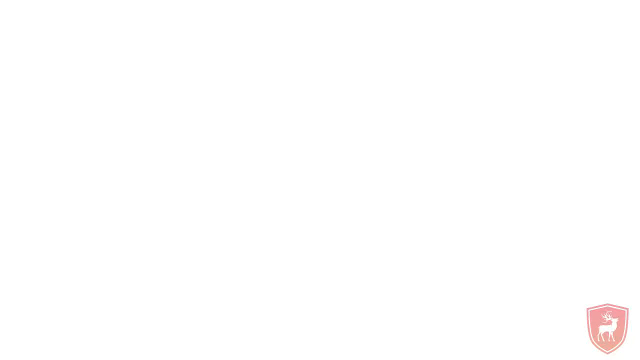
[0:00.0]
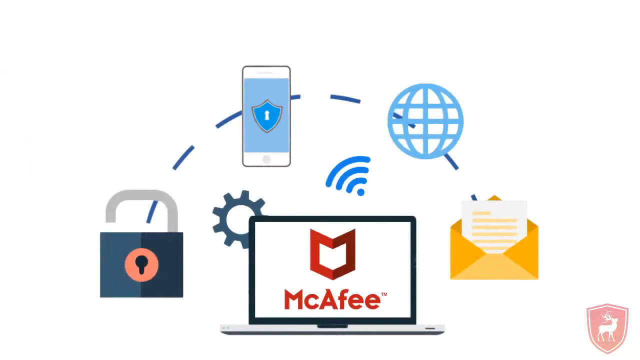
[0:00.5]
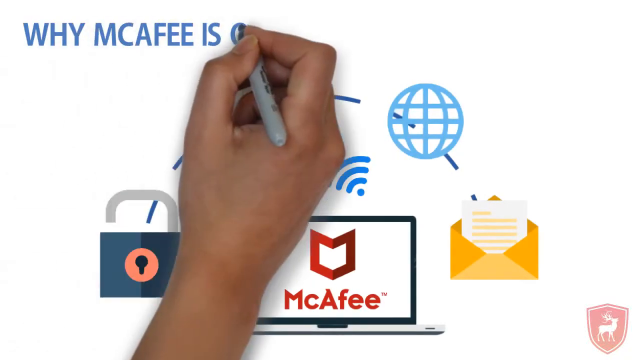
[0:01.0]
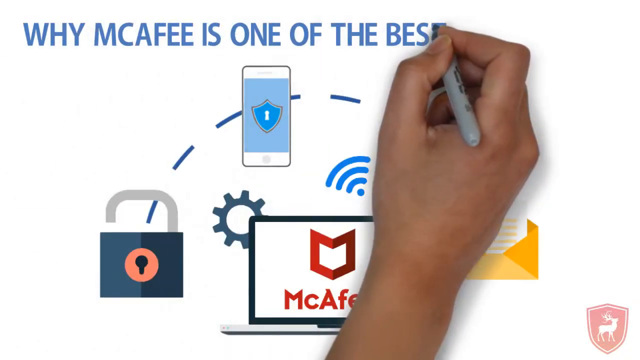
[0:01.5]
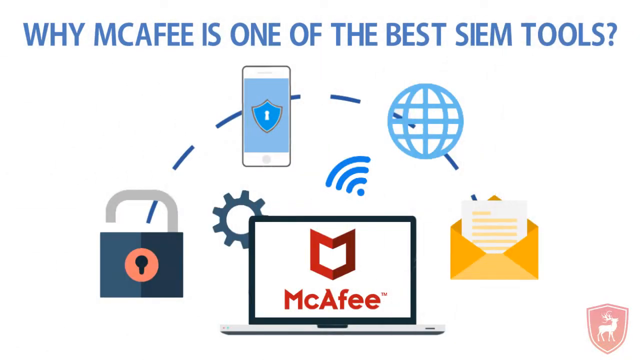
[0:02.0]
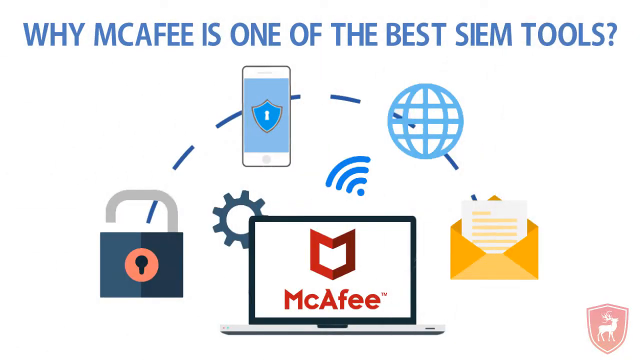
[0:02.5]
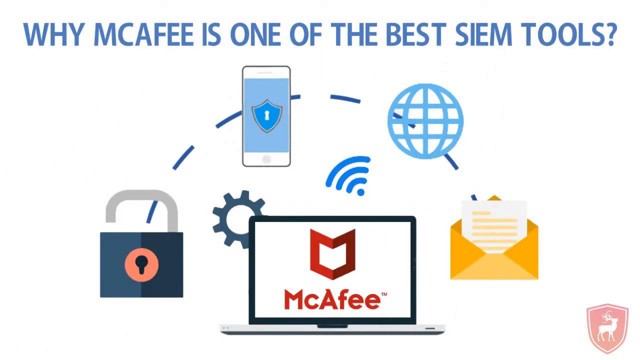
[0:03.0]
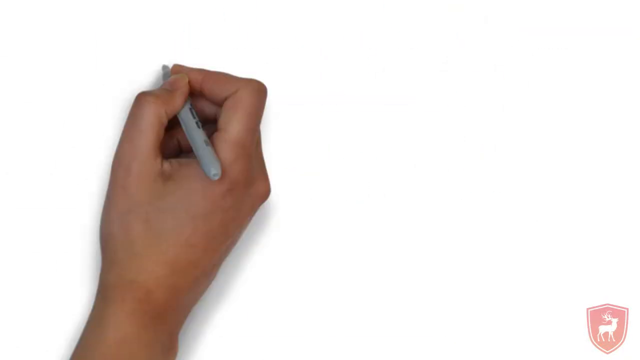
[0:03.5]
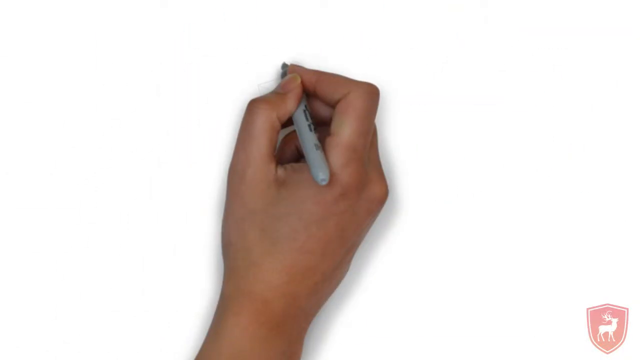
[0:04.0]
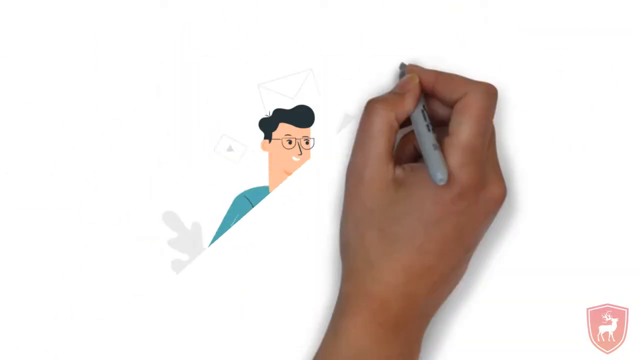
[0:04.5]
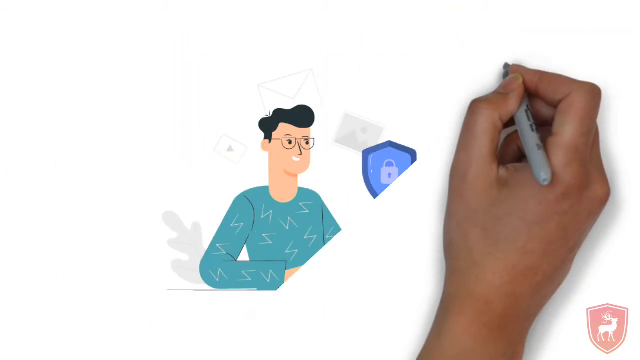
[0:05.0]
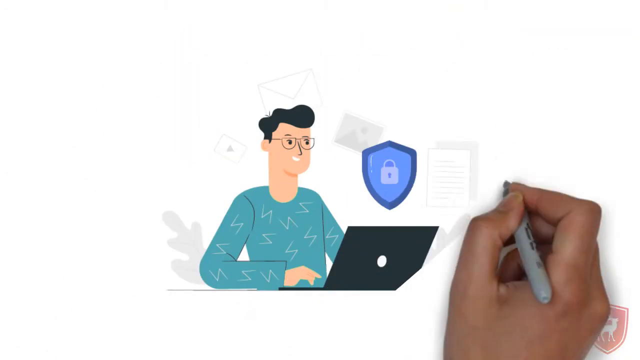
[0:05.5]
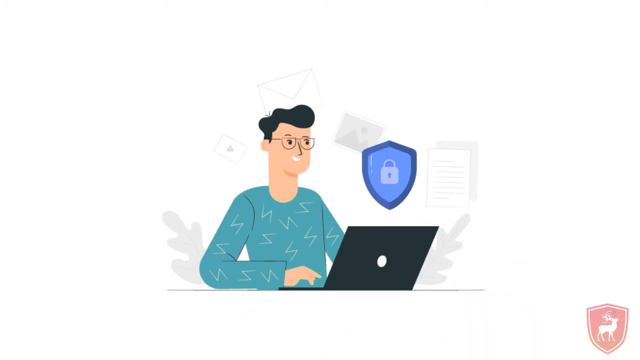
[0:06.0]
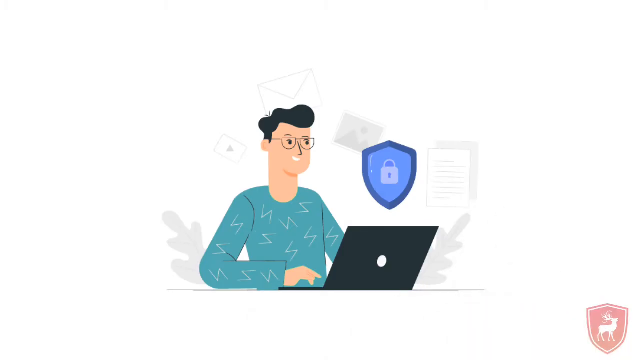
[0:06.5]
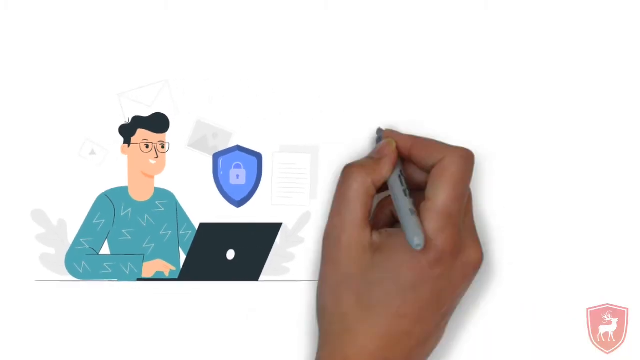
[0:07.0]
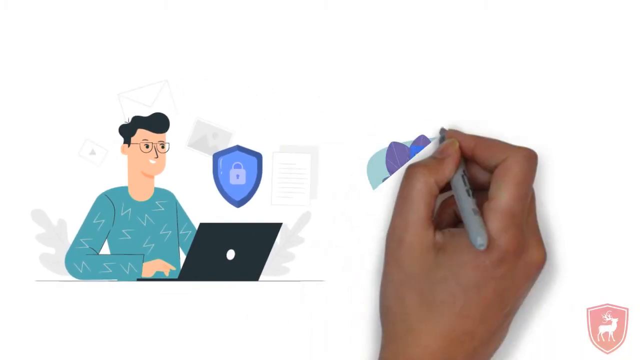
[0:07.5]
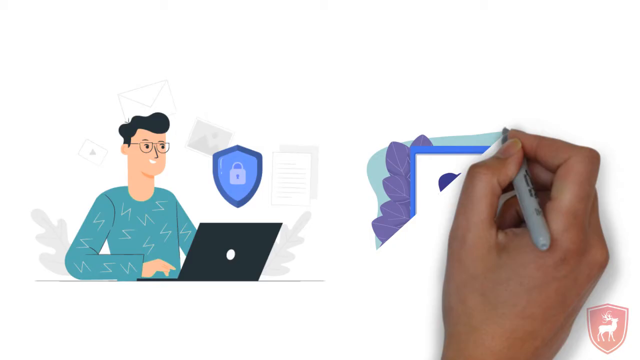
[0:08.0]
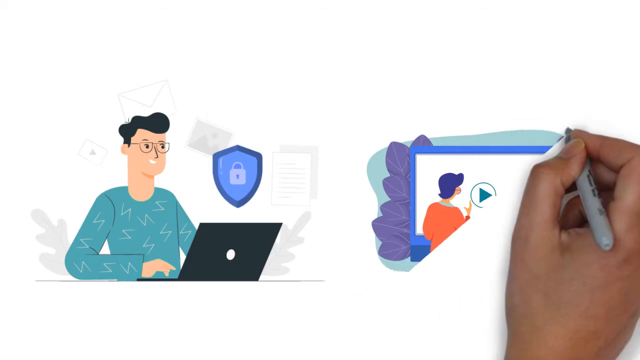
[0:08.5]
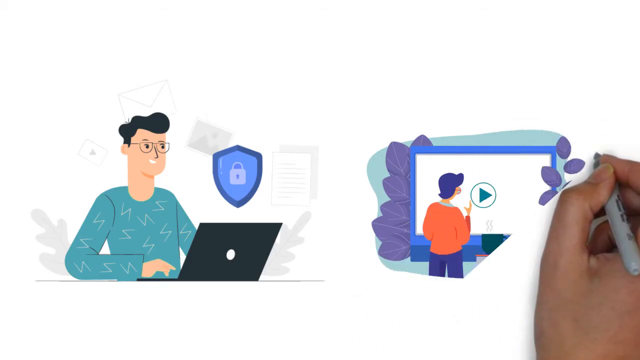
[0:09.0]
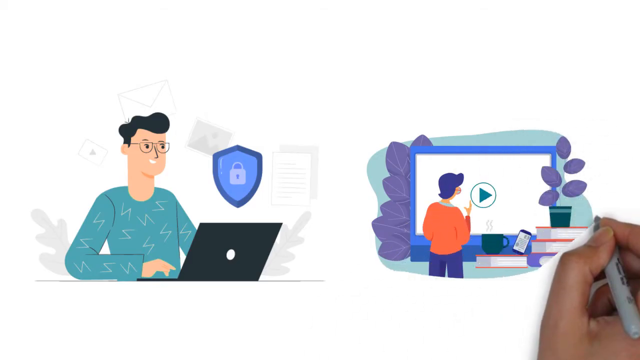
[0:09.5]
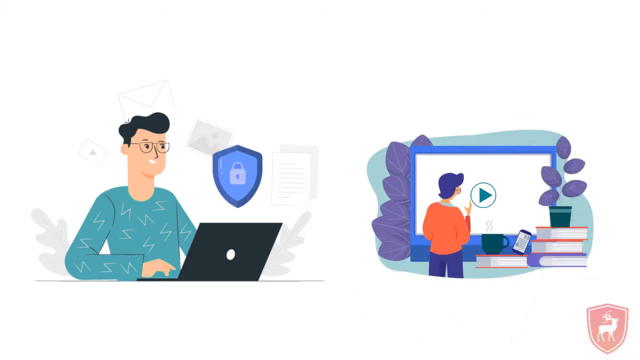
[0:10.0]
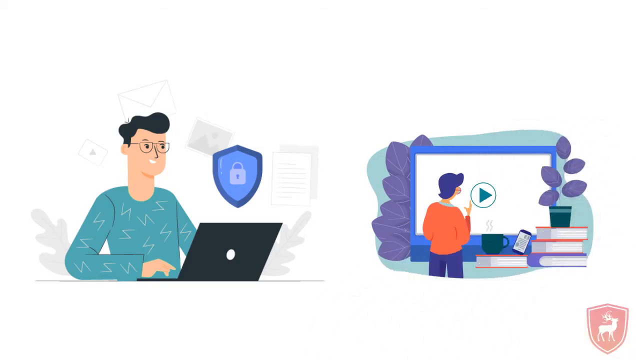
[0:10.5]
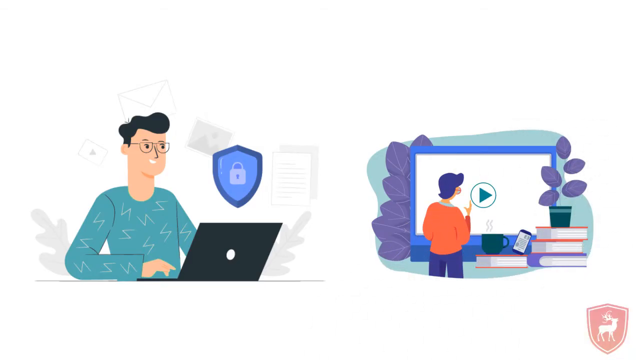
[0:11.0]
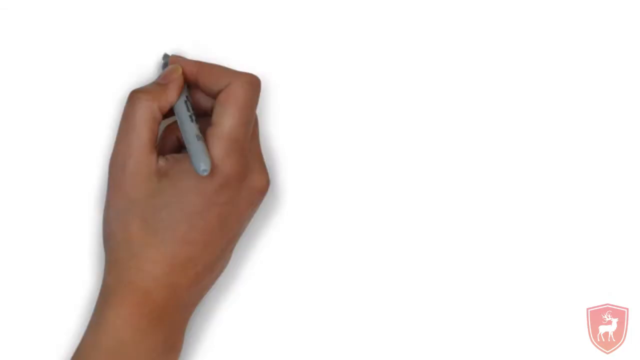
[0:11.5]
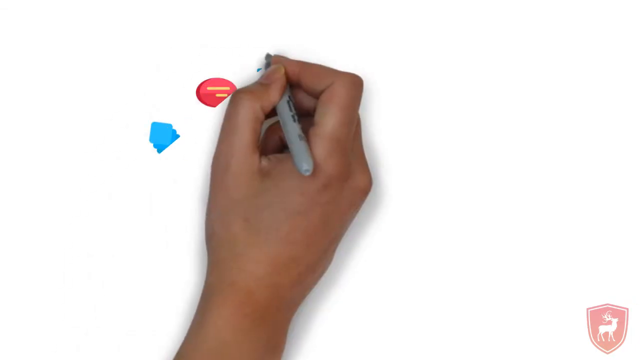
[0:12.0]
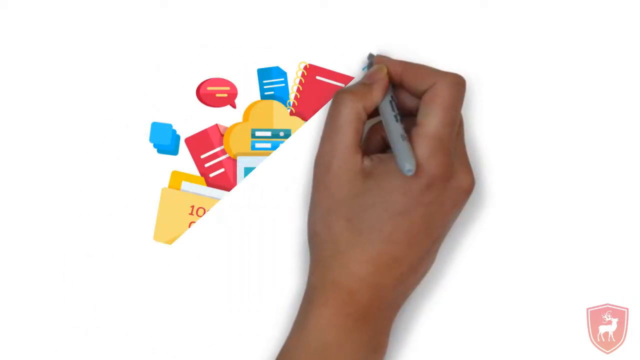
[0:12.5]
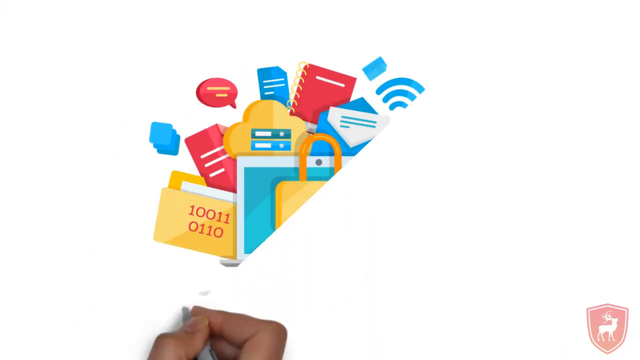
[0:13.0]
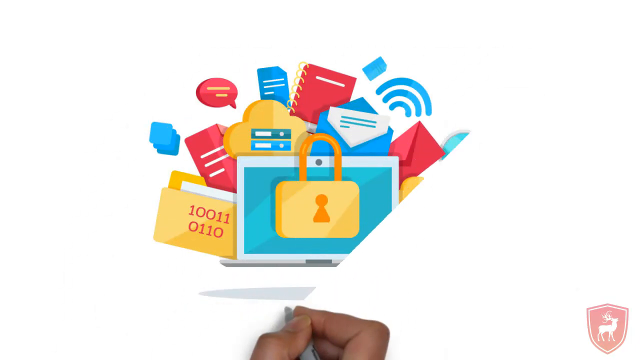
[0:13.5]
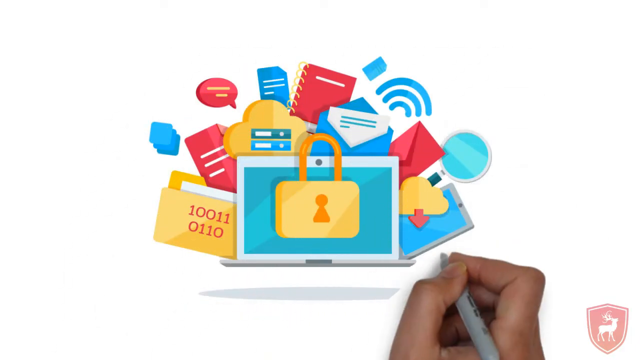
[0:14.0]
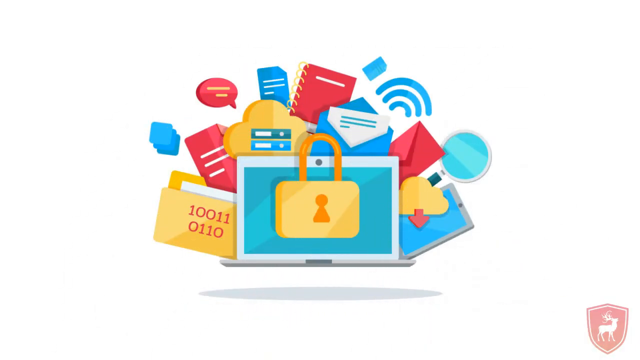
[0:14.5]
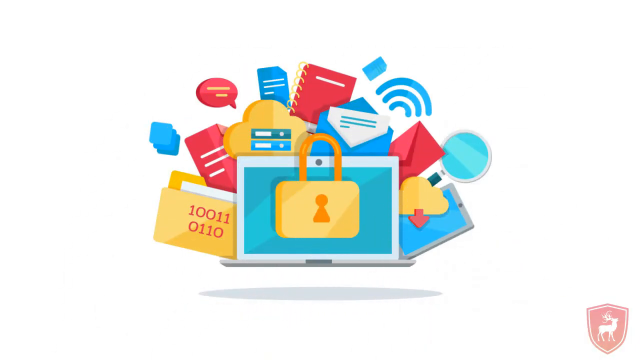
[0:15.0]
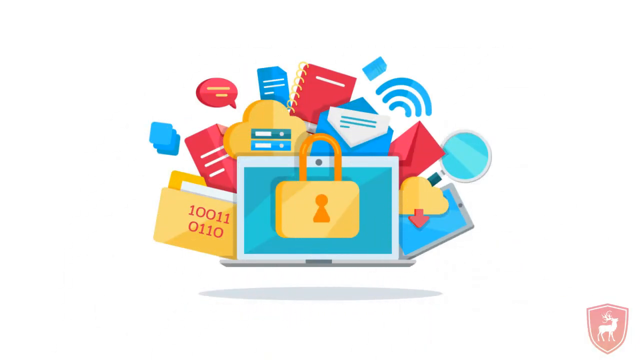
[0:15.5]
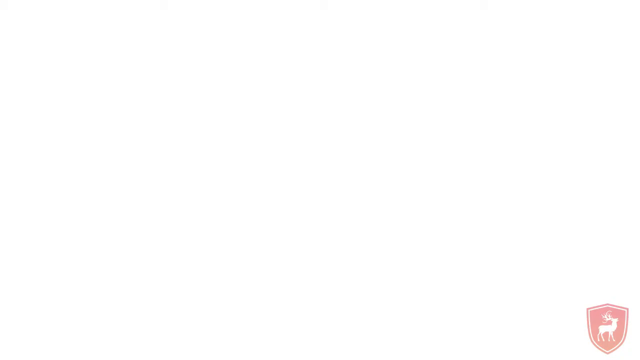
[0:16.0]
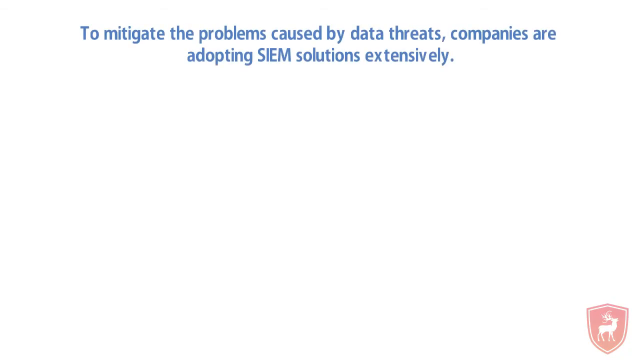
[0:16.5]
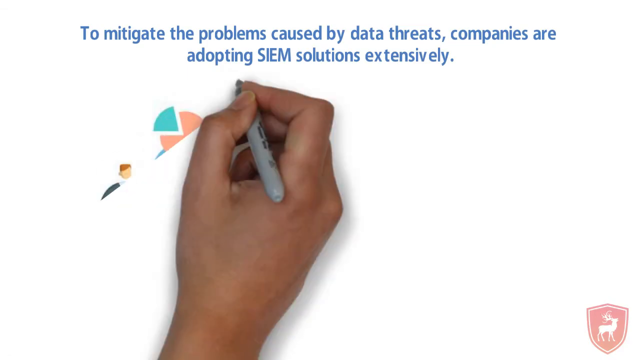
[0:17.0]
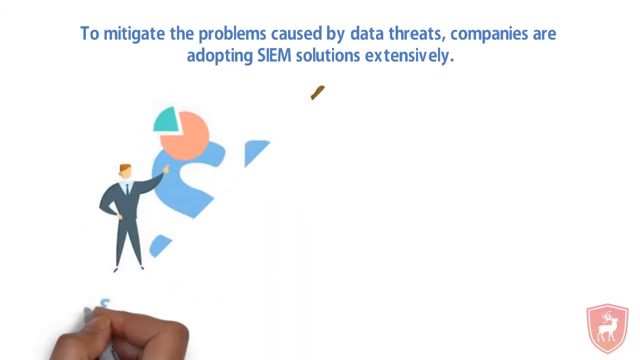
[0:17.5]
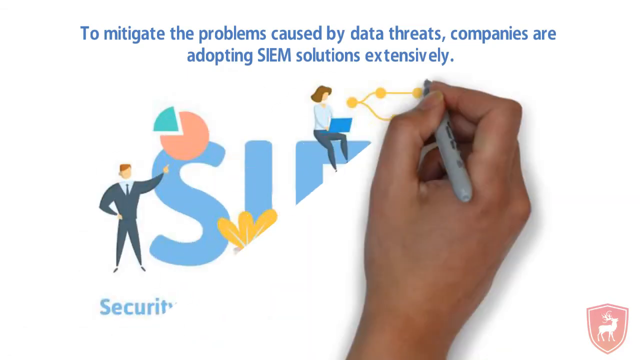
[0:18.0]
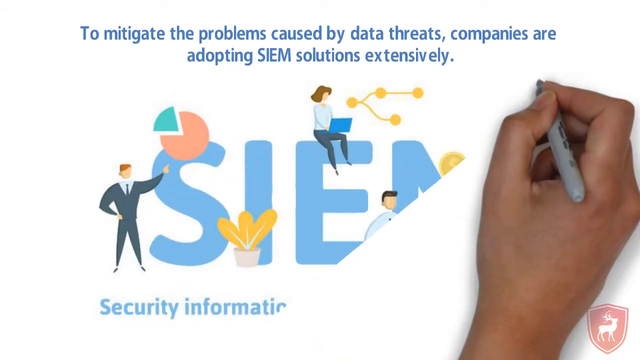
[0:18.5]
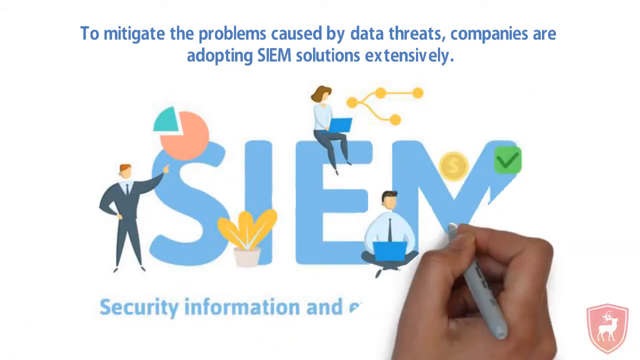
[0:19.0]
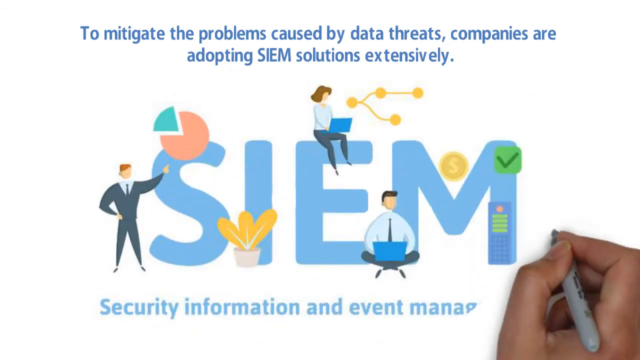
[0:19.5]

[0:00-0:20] The video appears to be about McAfee, the anti-virus software. There is white text along with a shield of a computer. It seems to be advertising McAfee's anti-virus and security protection against data threats. The visuals are a drawing.